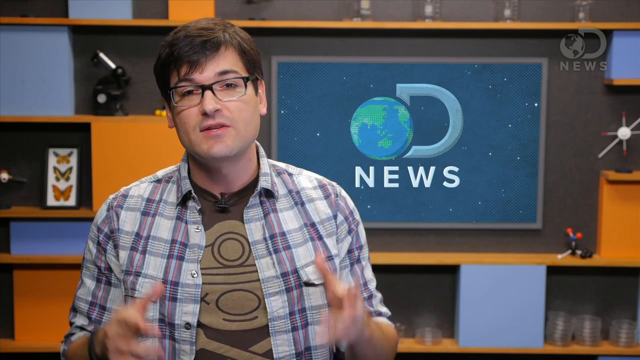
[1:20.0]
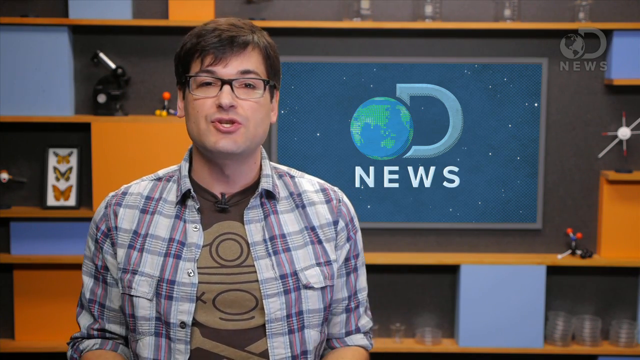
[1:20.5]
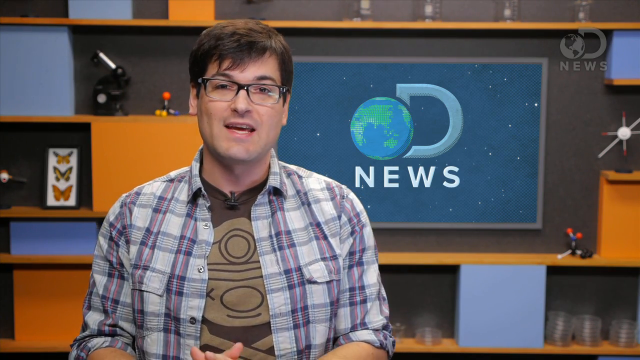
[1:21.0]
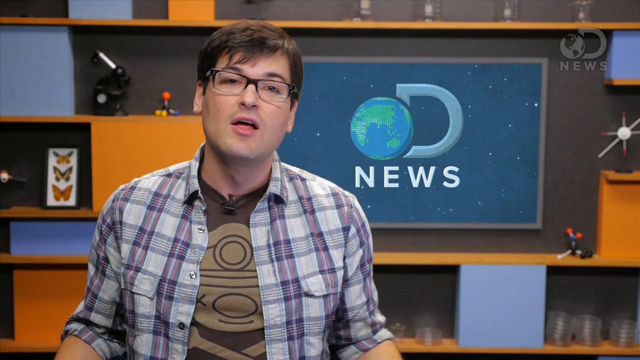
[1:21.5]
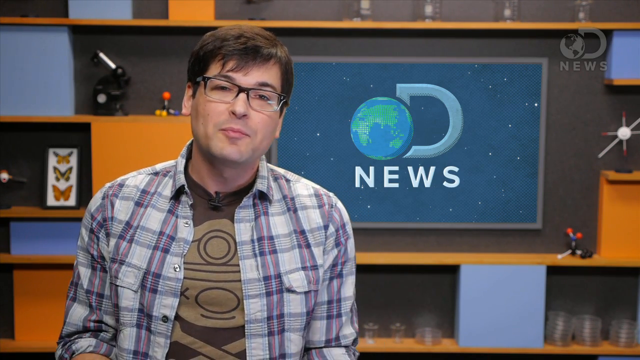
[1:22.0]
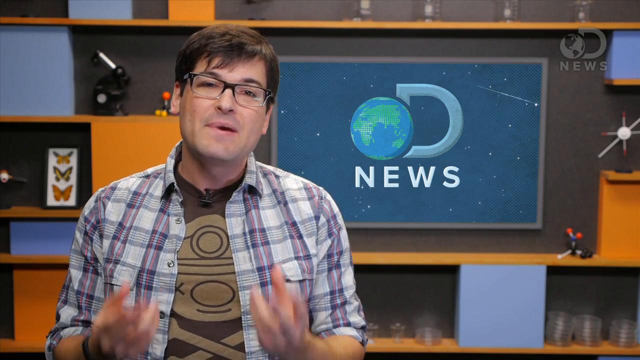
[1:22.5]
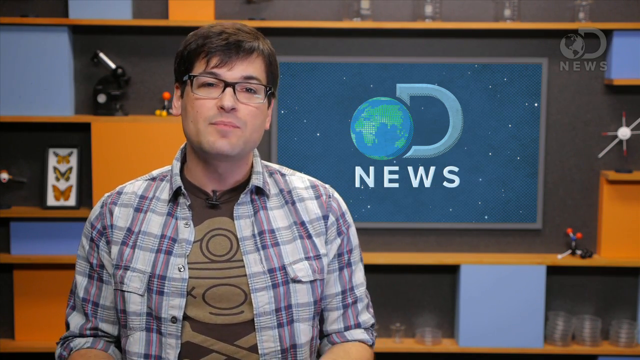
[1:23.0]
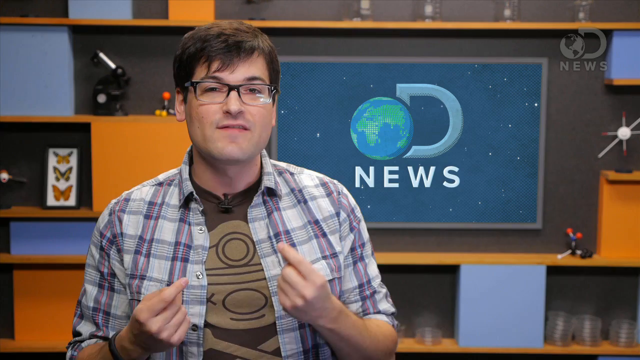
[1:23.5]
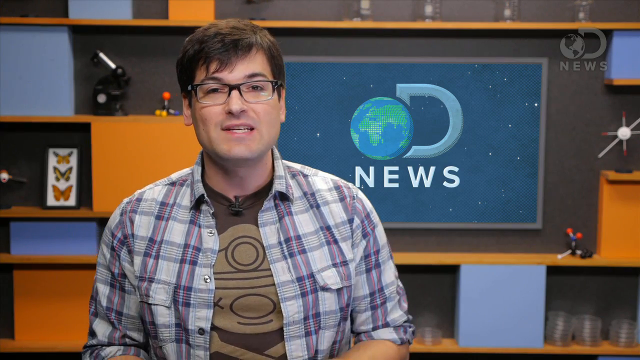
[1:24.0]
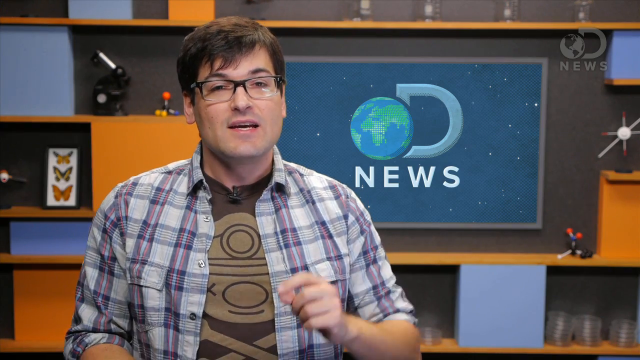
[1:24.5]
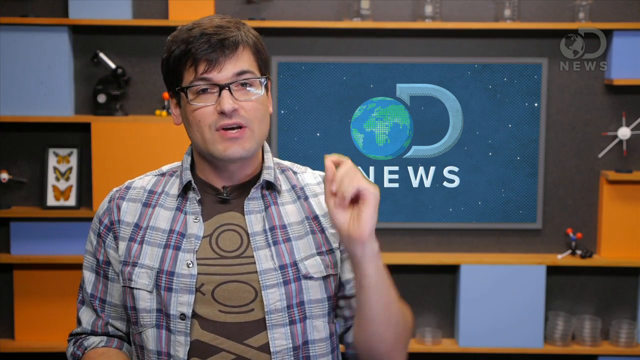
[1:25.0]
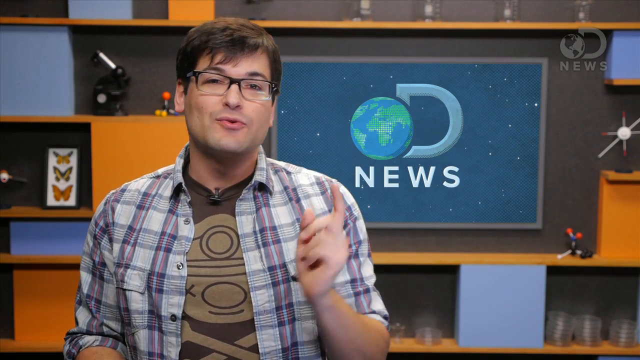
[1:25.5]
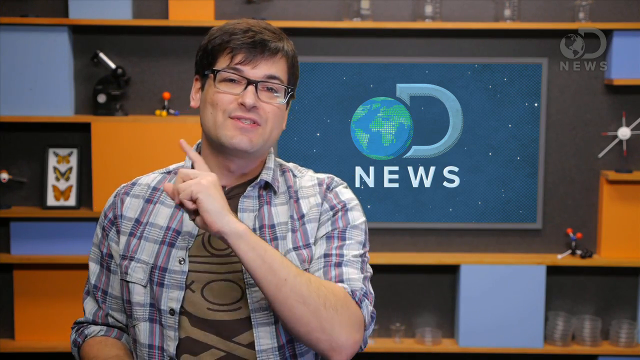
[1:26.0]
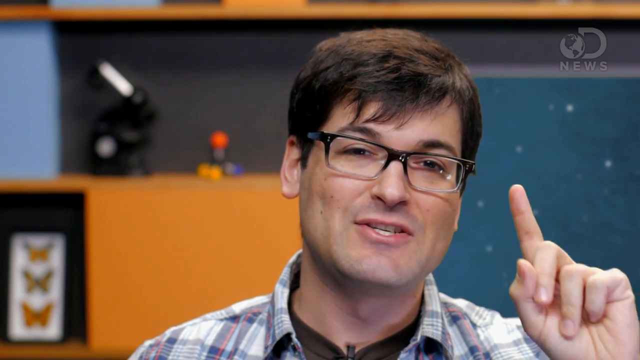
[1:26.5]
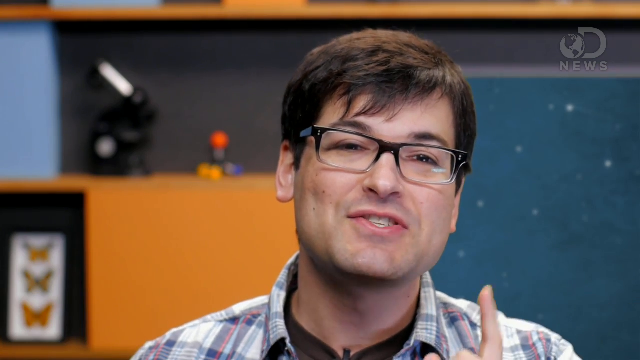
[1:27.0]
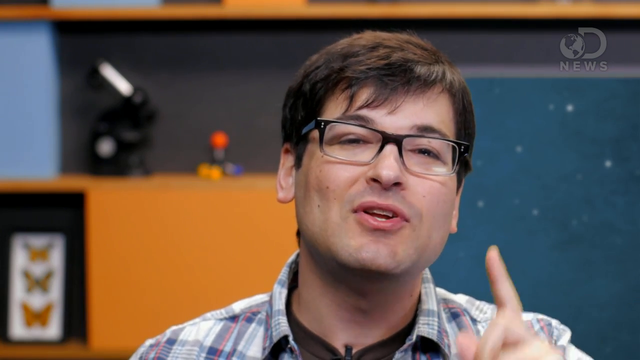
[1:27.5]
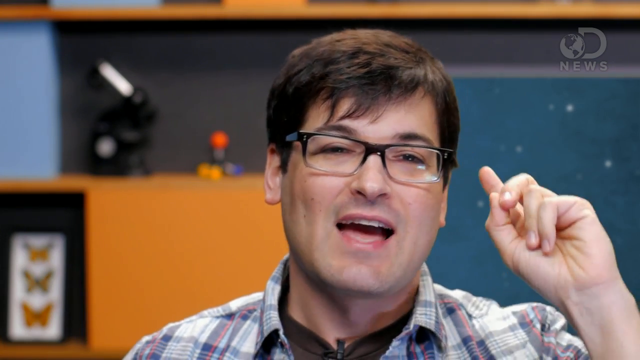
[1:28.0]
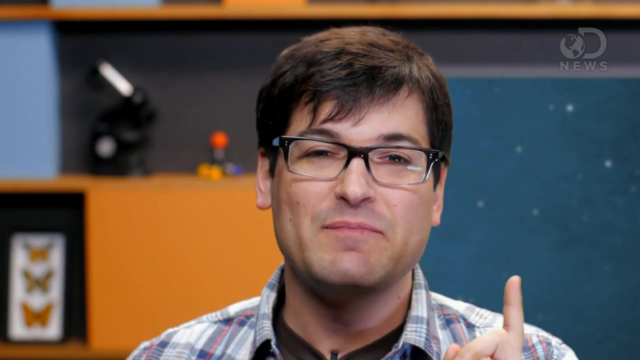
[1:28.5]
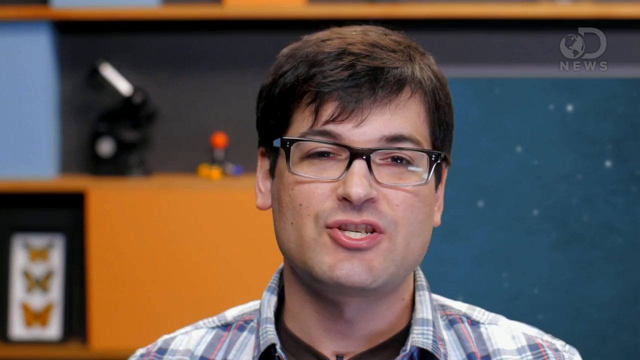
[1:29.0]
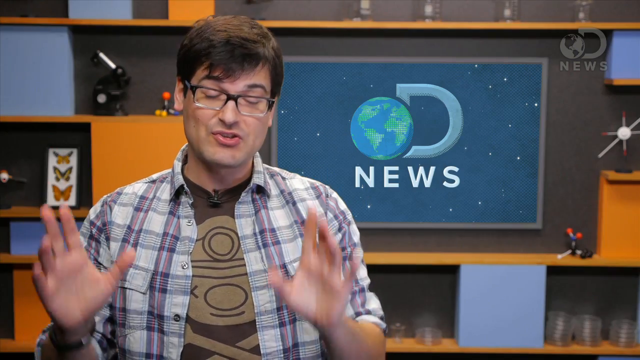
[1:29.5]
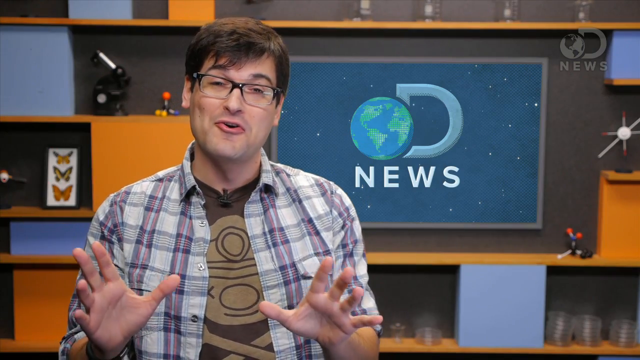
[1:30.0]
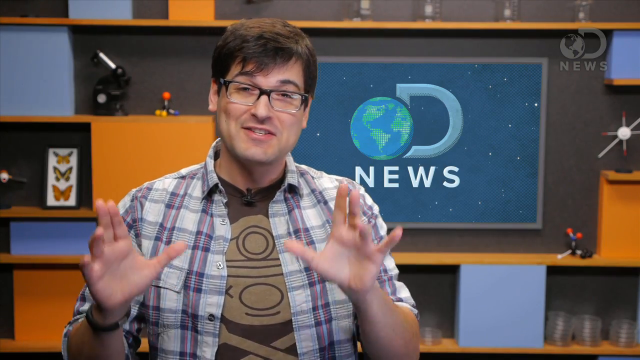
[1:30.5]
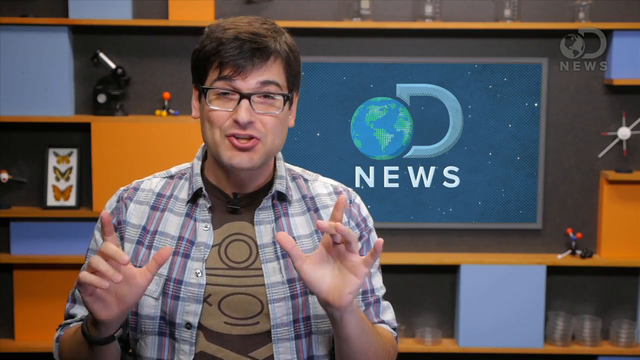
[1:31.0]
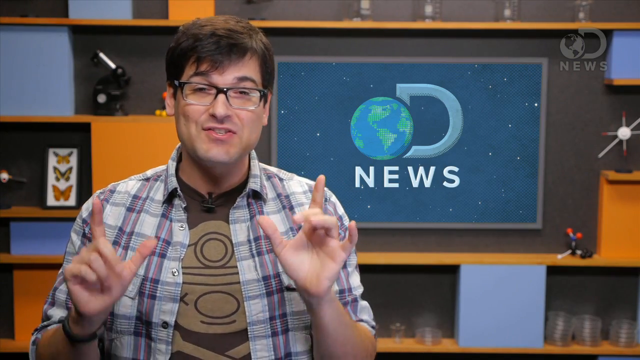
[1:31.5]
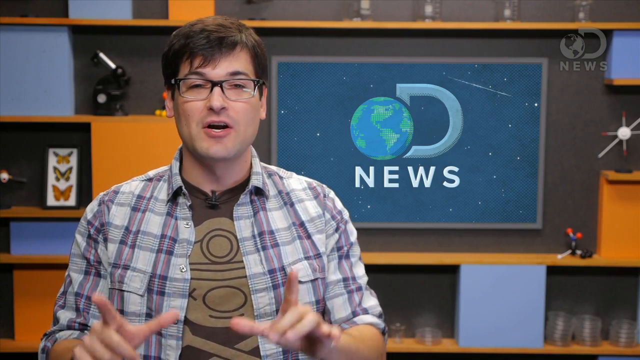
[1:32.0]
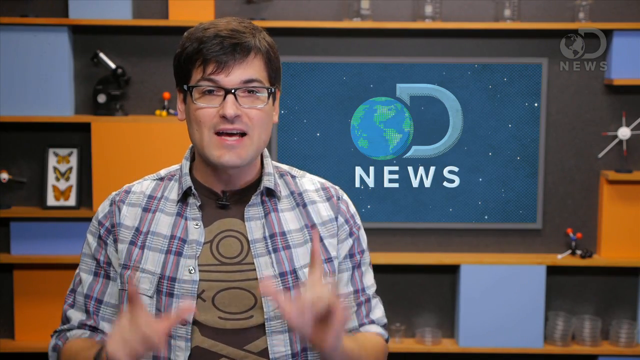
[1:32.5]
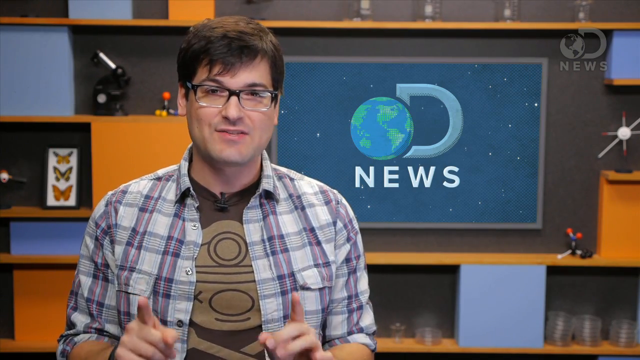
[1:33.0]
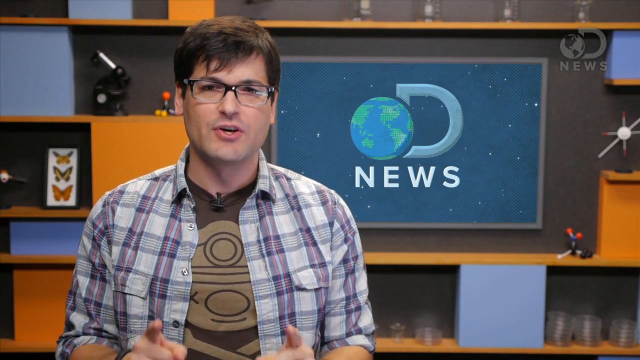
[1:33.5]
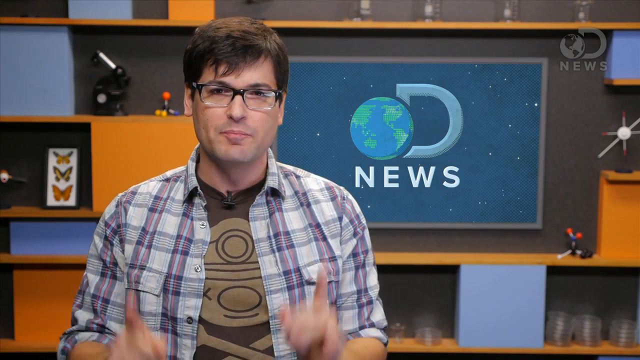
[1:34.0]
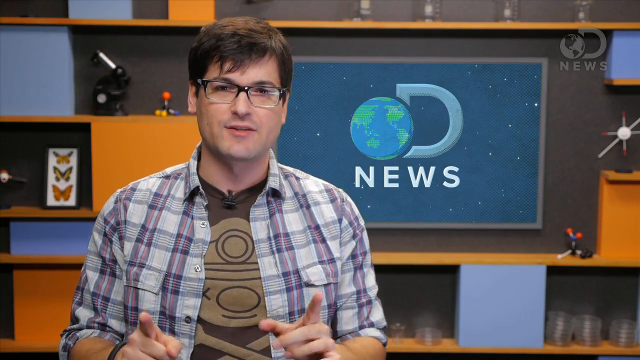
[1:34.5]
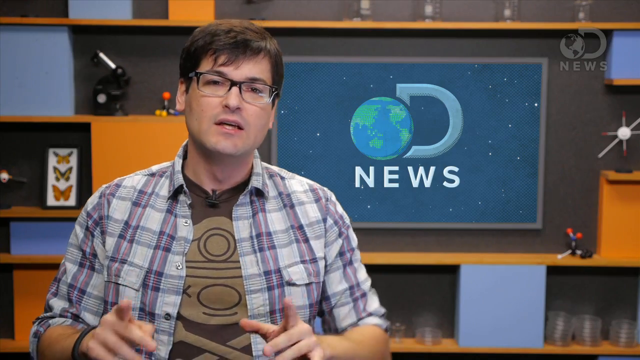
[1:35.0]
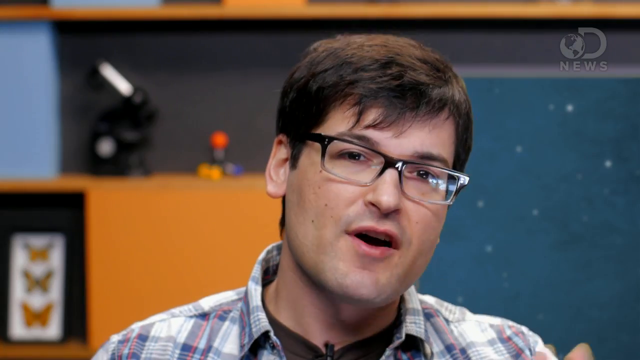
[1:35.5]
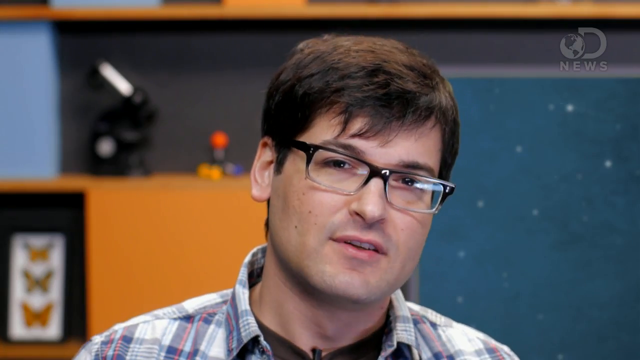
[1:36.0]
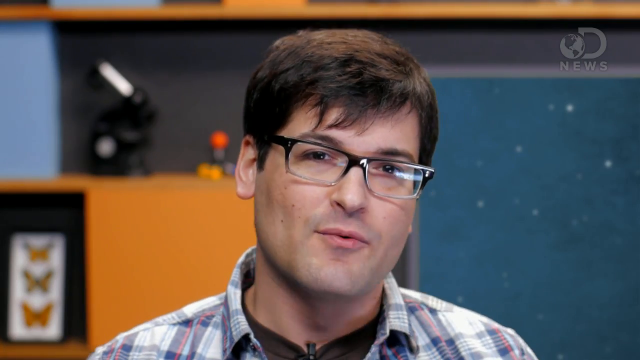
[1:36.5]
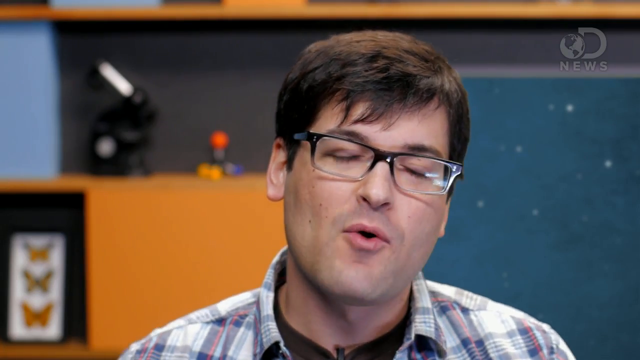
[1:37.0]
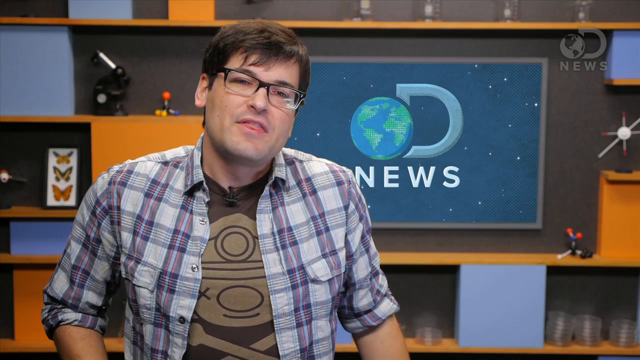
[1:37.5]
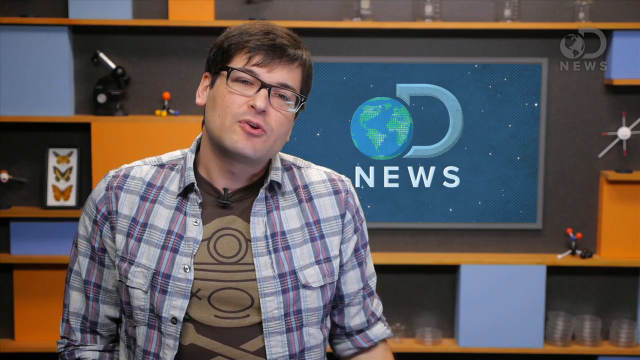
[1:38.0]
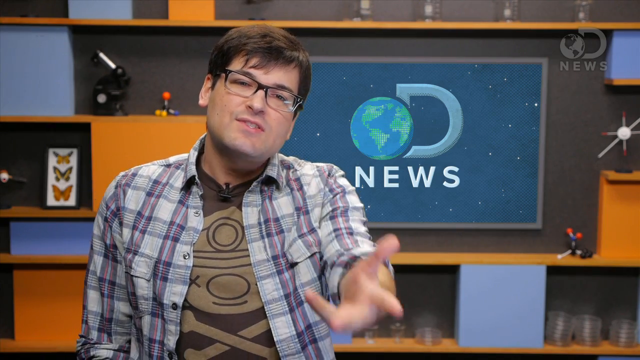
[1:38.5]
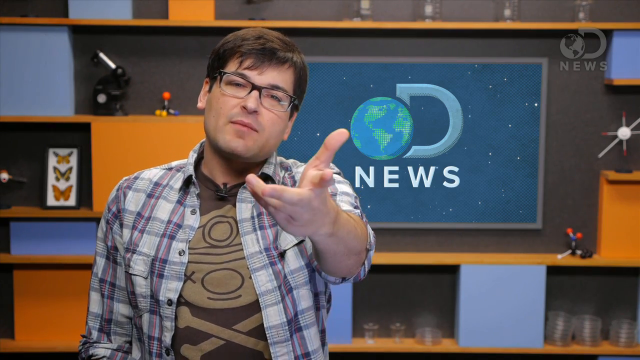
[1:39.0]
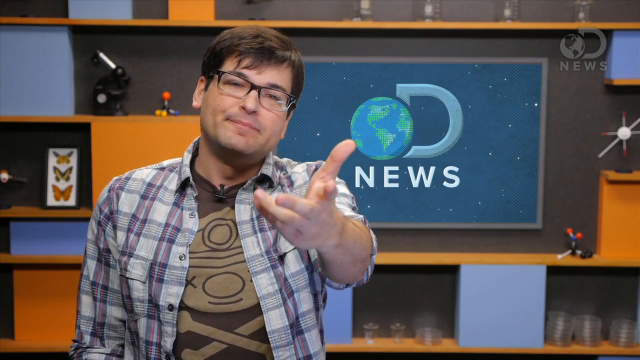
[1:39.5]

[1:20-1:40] As he talks, he curls all his fingers upward and holds them in front of his chest, emphasizing something, then puts them down. He brings up his left hand with the pointer finger out and swings it from his left shoulder to his right and back to his left. He then holds his pointer finger up in the air, parallel to his head, and keeps swinging it down for emphasis. Next he holds his palms open in front of him, facing the camera, then puts his middle and ring fingers down, keeping his hands in that shape with thumbs out as he talks. He points to the camera again, this time with his hands kind of turned the other way rather than upright, thumb out and a finger pointing toward the camera, almost as if inviting the audience to something.